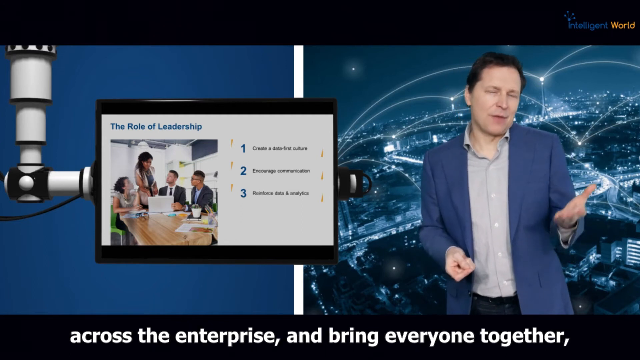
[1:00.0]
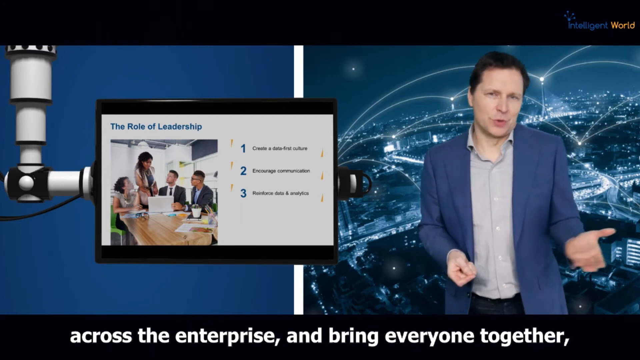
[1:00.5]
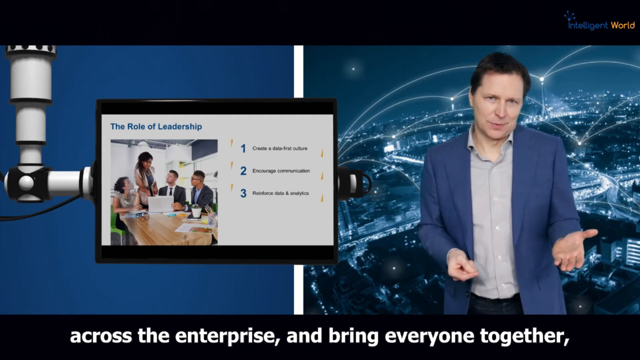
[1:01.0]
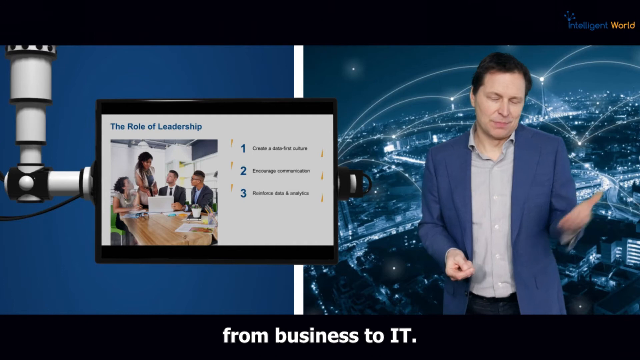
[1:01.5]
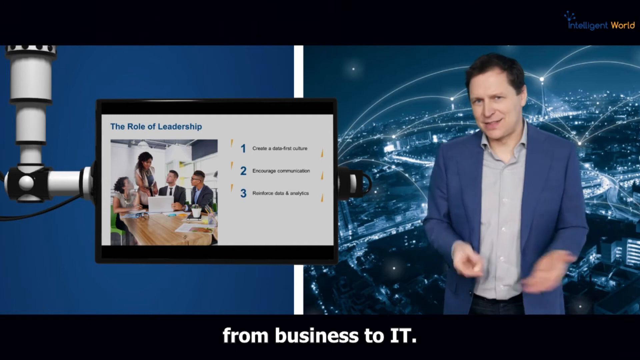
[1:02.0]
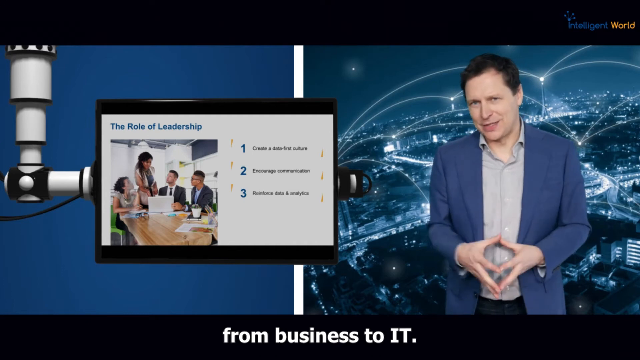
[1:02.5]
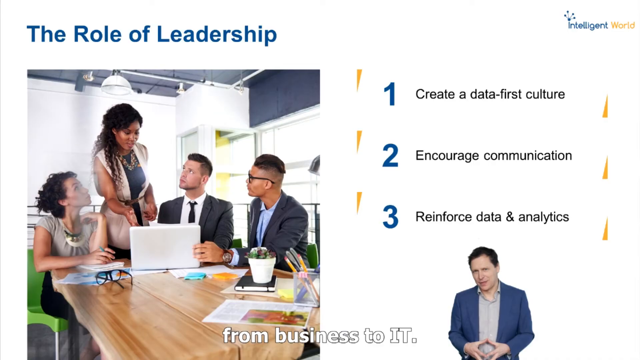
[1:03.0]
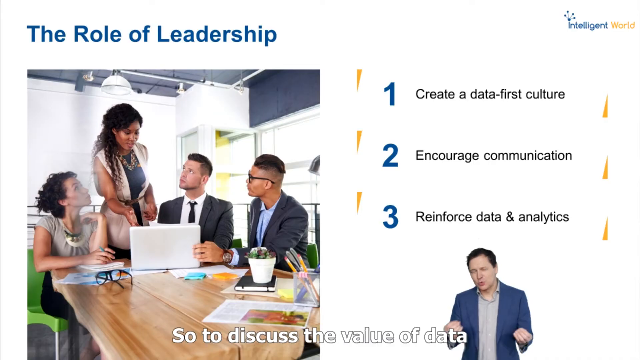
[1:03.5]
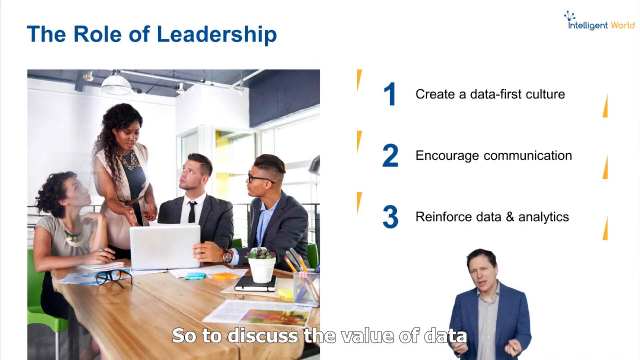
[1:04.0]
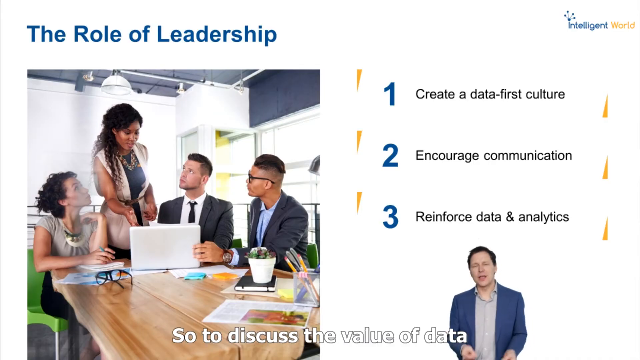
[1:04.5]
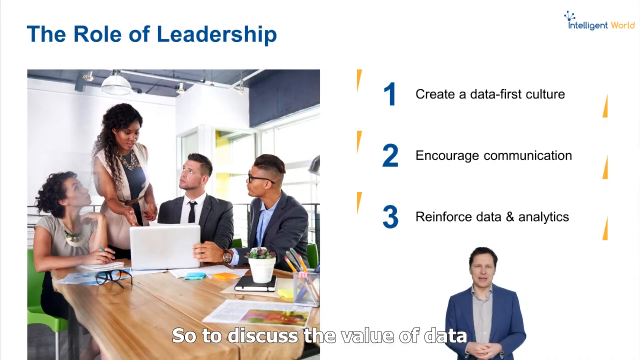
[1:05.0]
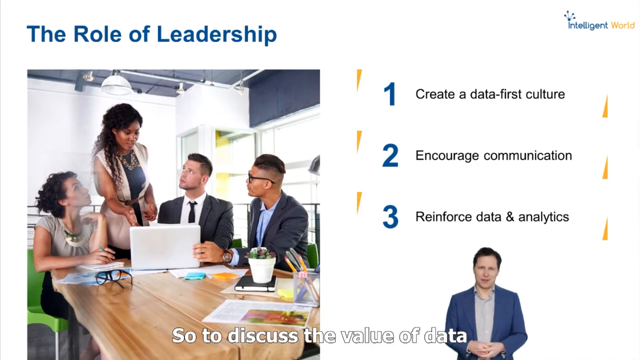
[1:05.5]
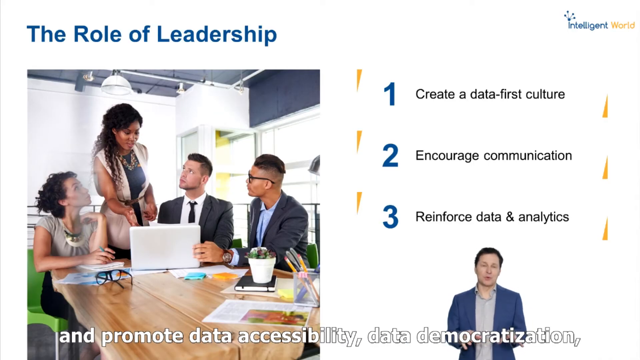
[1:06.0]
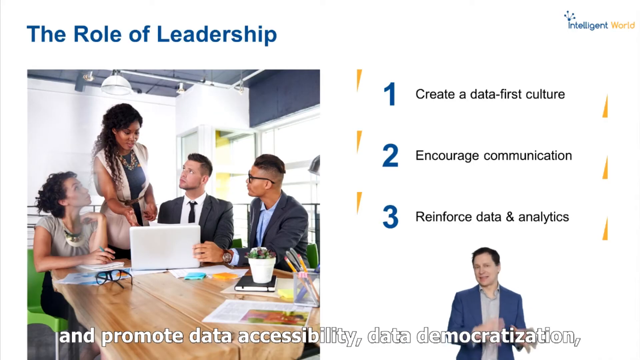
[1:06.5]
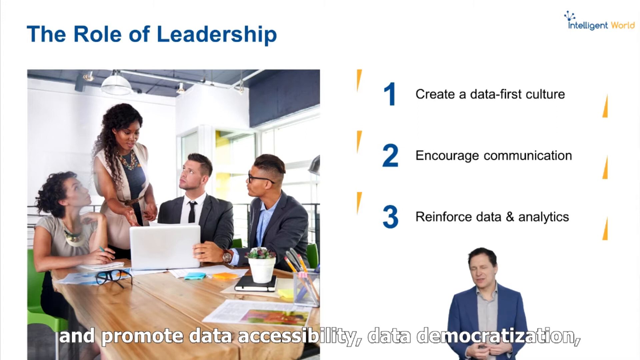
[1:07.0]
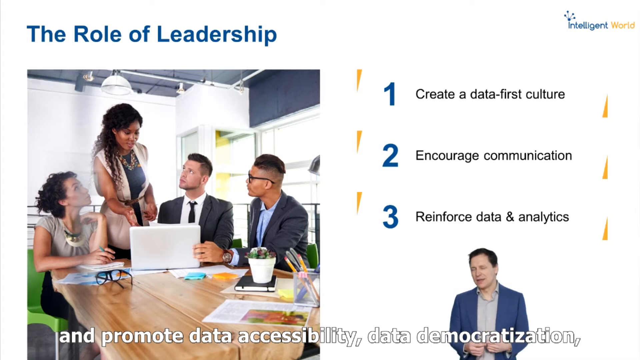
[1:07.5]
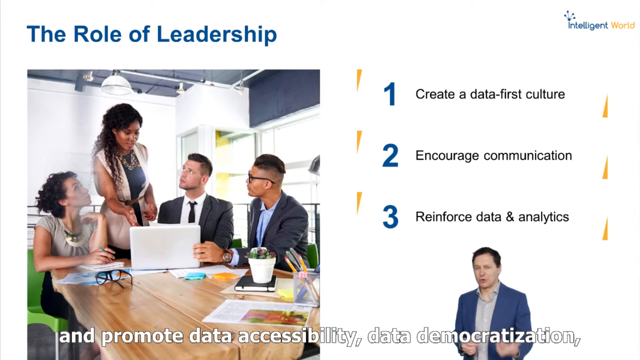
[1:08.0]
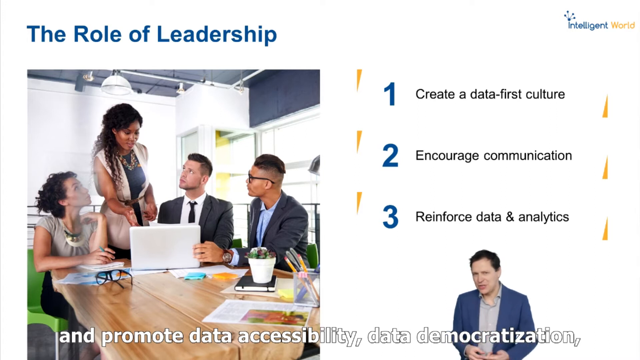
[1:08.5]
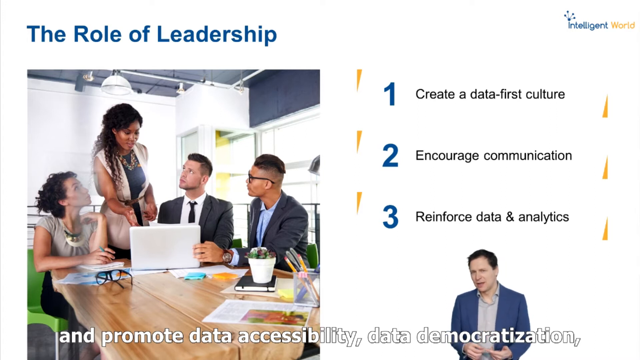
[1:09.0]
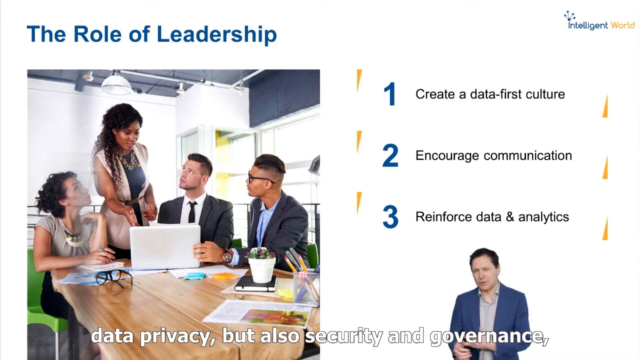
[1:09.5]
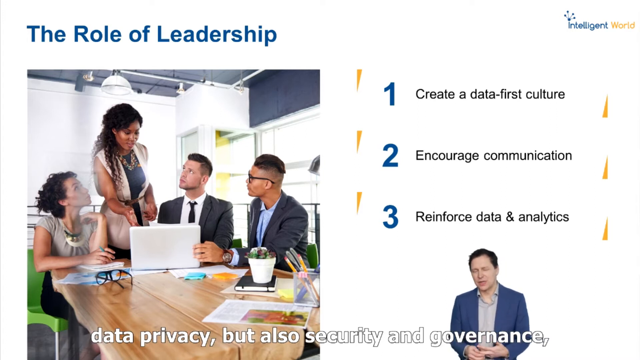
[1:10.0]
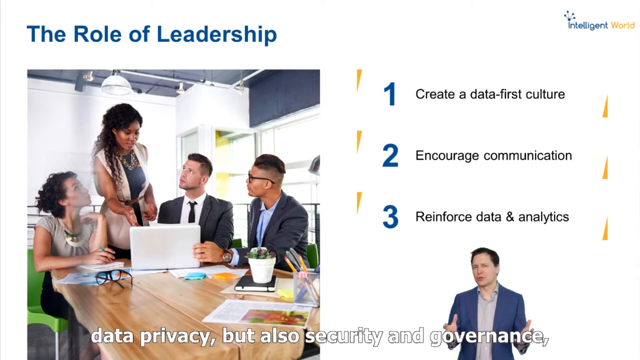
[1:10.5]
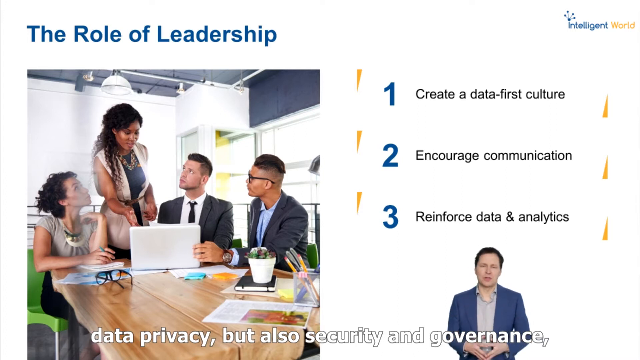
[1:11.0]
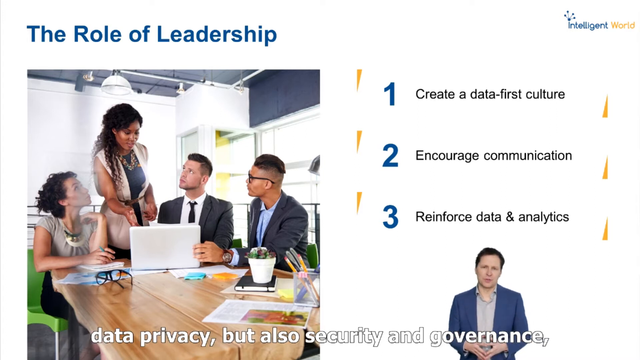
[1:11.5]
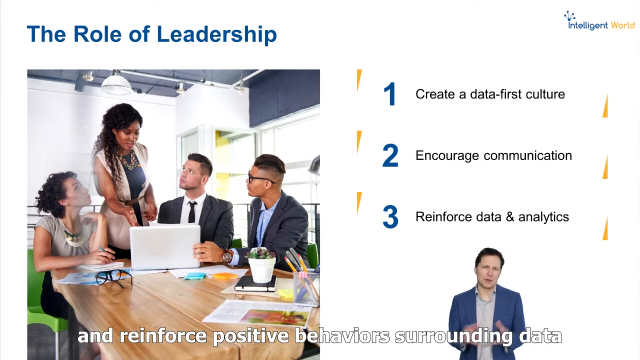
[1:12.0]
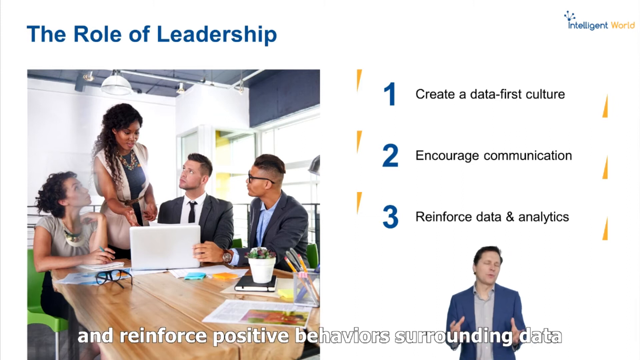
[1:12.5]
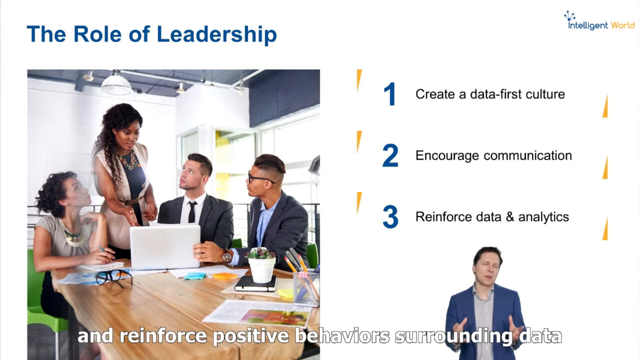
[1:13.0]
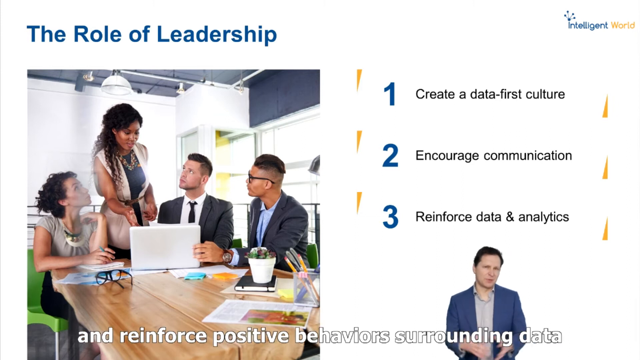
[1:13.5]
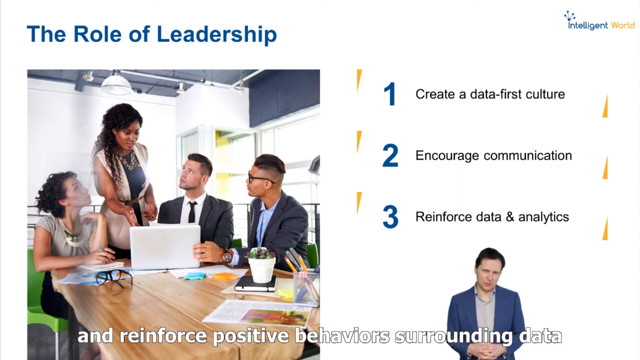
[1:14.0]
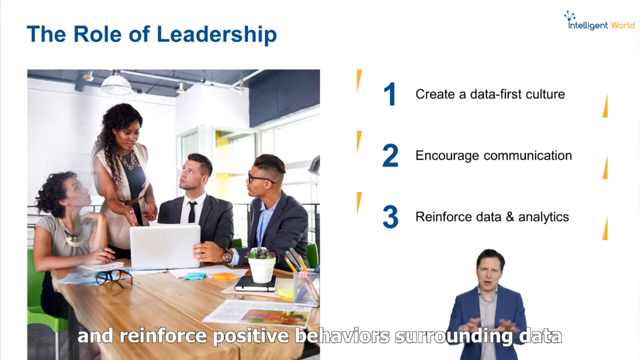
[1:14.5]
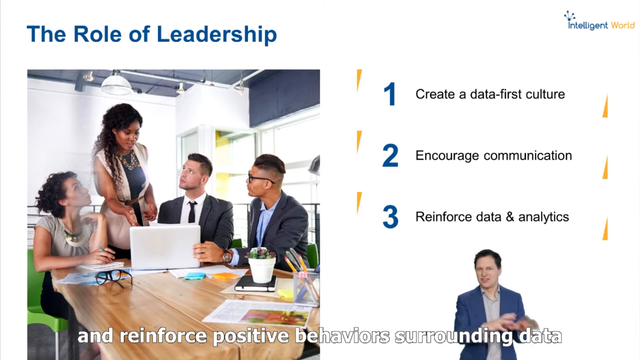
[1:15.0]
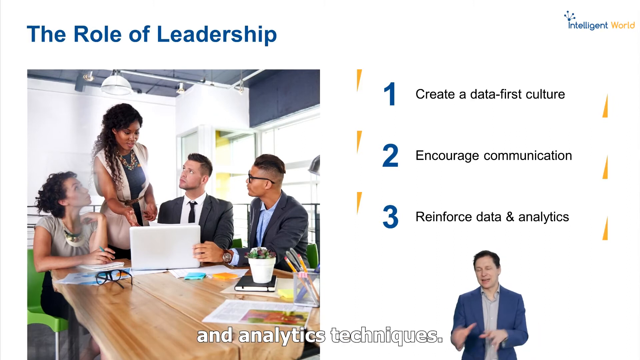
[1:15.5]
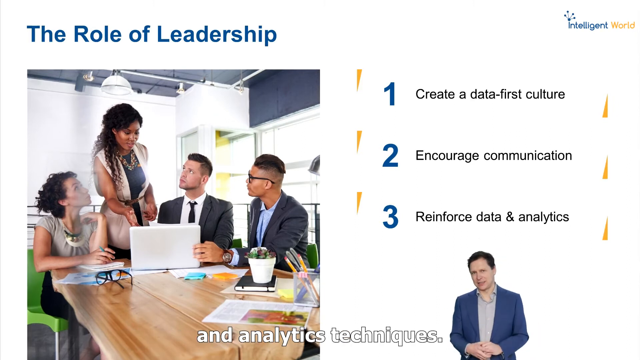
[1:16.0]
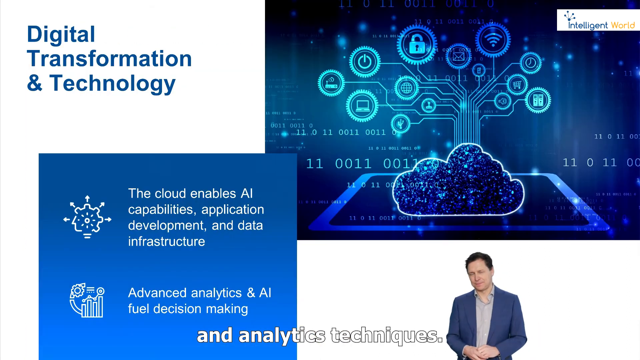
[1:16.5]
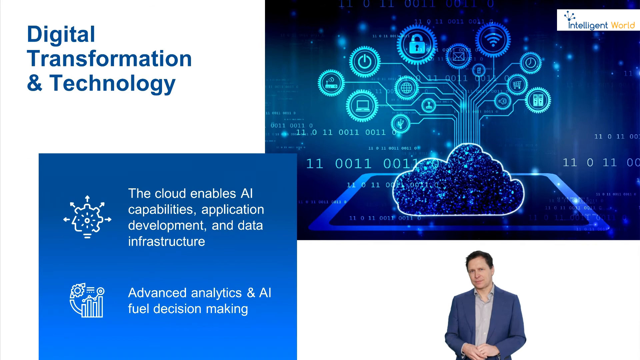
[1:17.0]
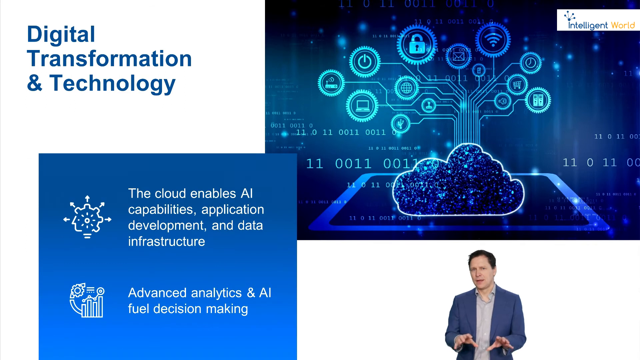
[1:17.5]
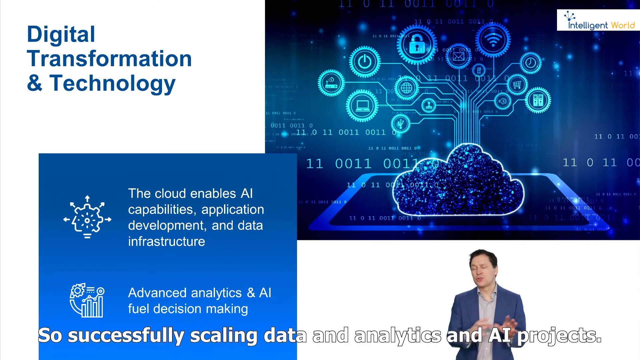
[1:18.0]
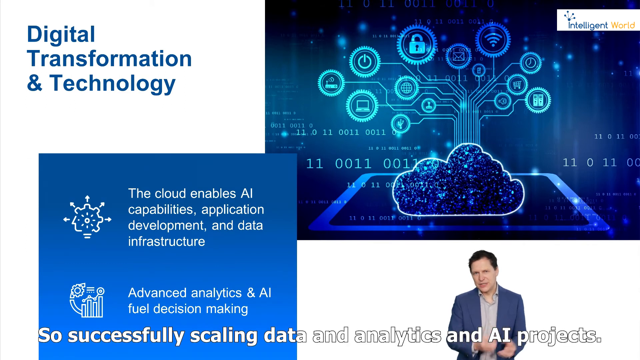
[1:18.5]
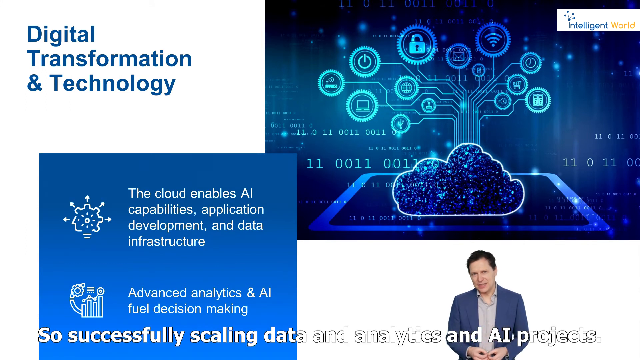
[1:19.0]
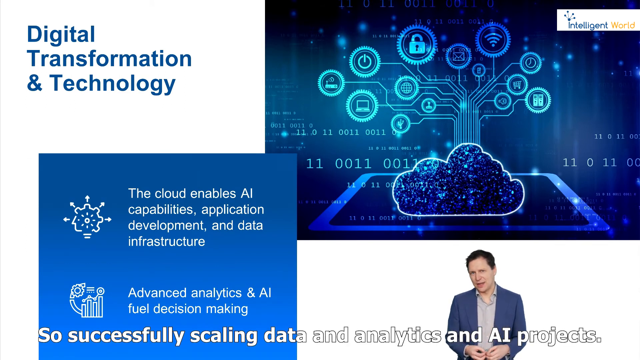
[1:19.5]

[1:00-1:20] The man giving the presentation is still in a professional setting with the backdrop of the city, with a monitor on the left-hand side. The monitor is blown up and he is minimized again; it shows "the role of leadership" with the same items, starting with "create a data-first culture." Another slide follows, titled "digital transformation in technology," with what seem to be icons, one looking like a cog and another like a machine. It has text such as "the cloud enables AI capabilities, application development, and data infrastructure," and next to the machine icon, "advanced analytics and AI-fueled decision-making." A larger graphic is in the upper right-hand corner next to the text "Intelligent World," possibly the logo of the company giving the presentation.